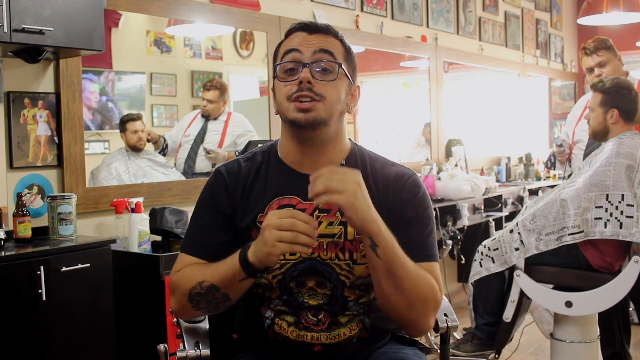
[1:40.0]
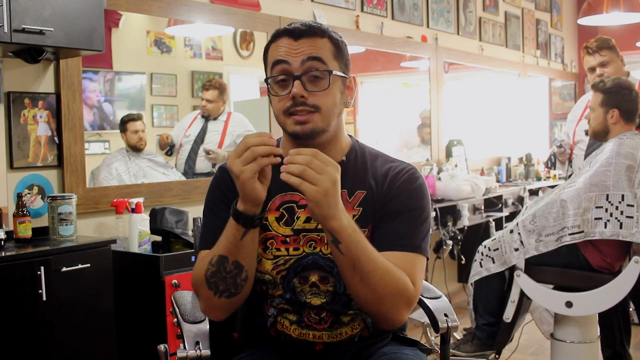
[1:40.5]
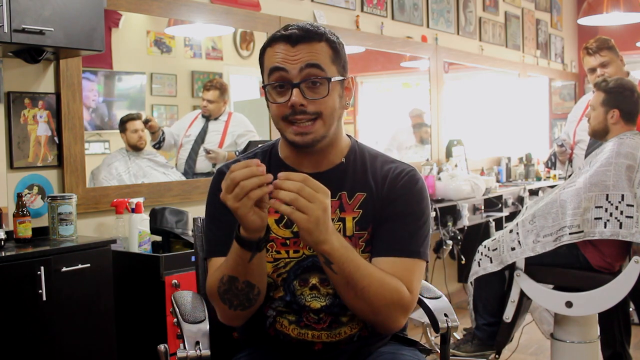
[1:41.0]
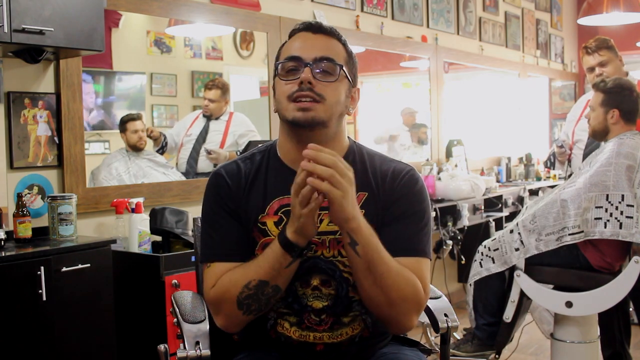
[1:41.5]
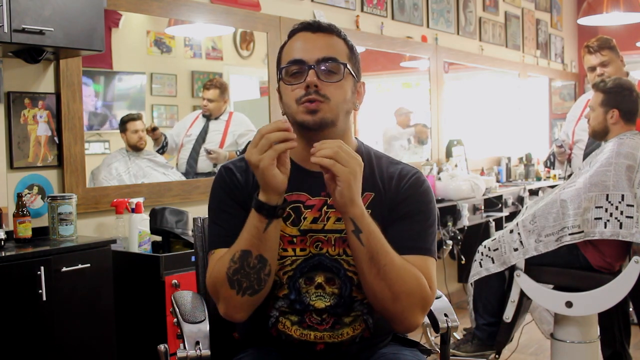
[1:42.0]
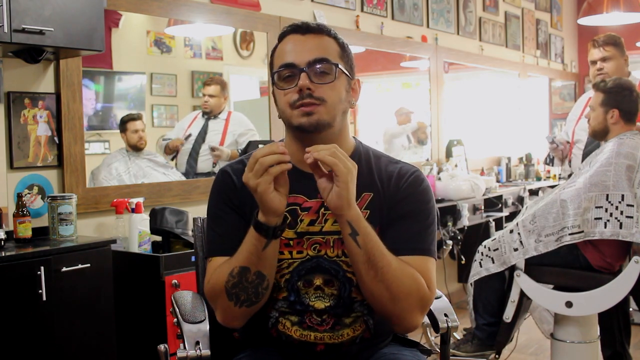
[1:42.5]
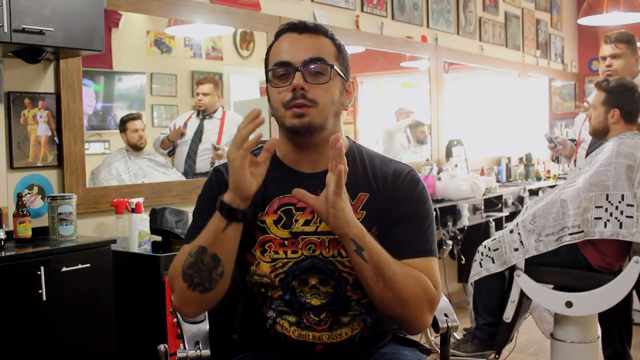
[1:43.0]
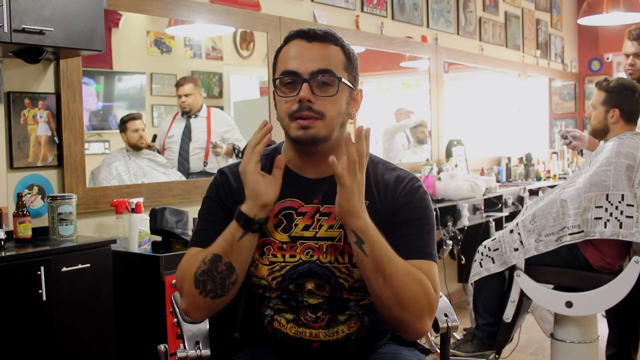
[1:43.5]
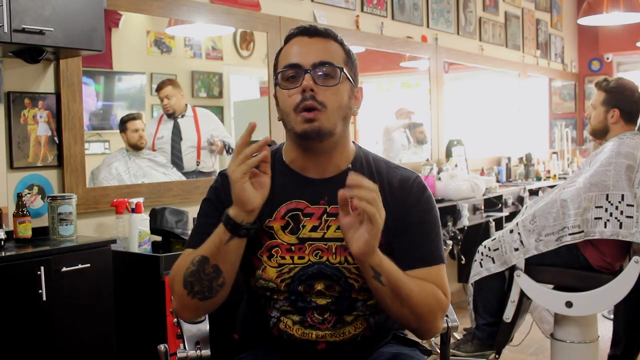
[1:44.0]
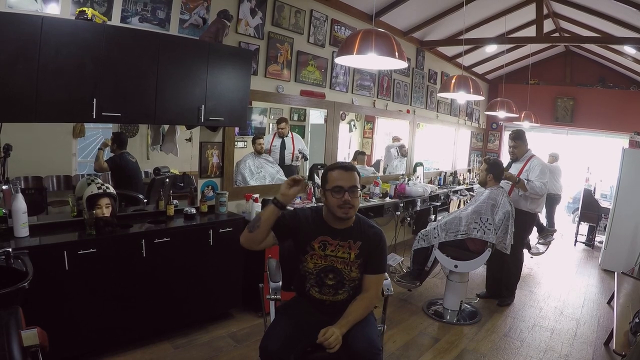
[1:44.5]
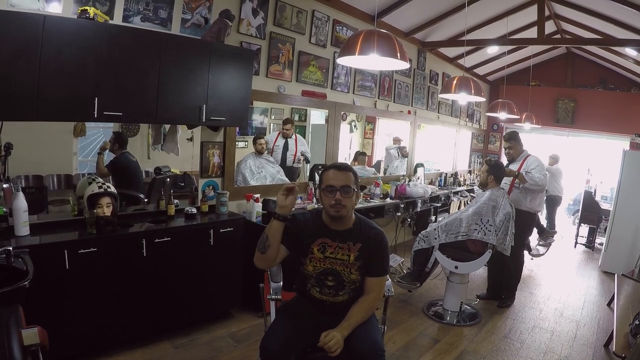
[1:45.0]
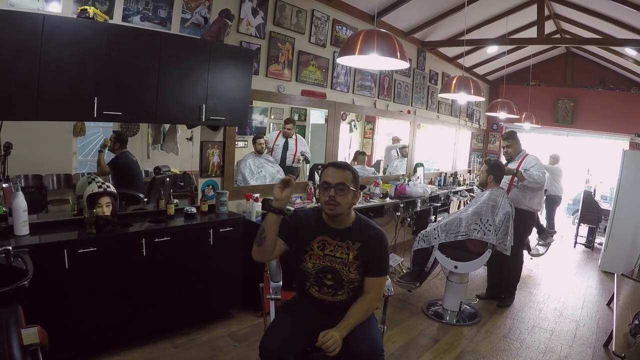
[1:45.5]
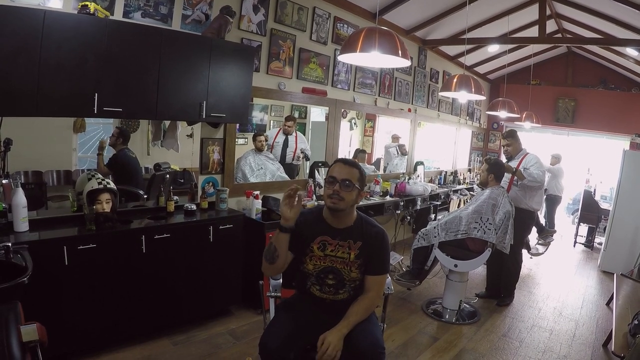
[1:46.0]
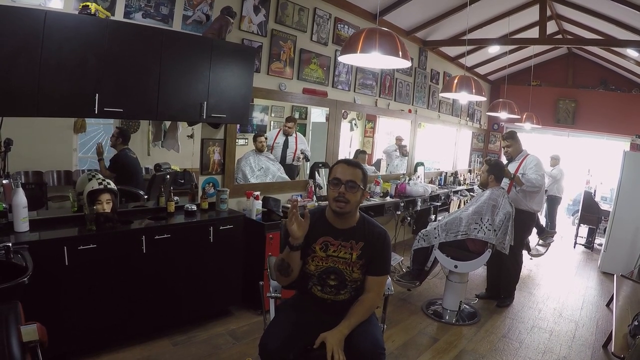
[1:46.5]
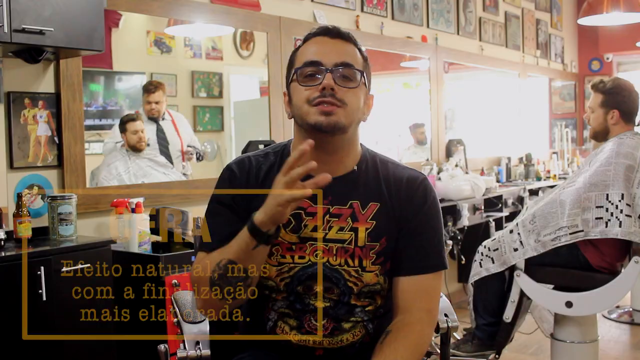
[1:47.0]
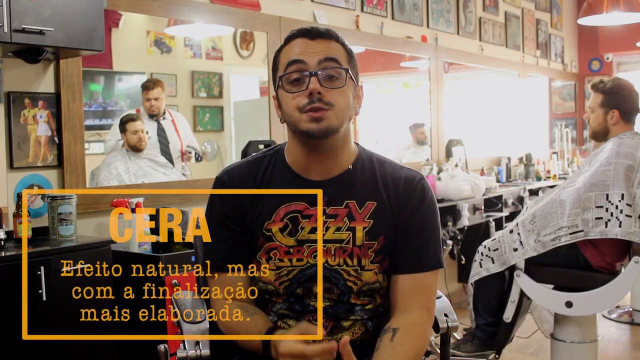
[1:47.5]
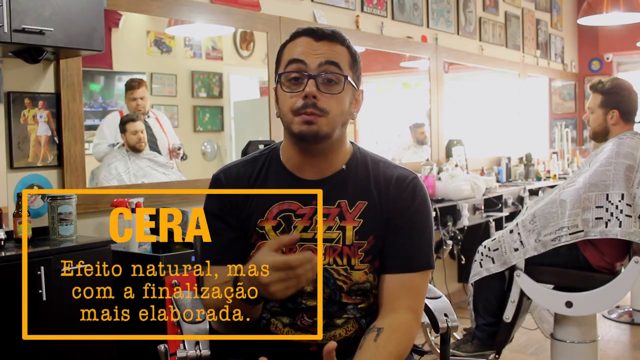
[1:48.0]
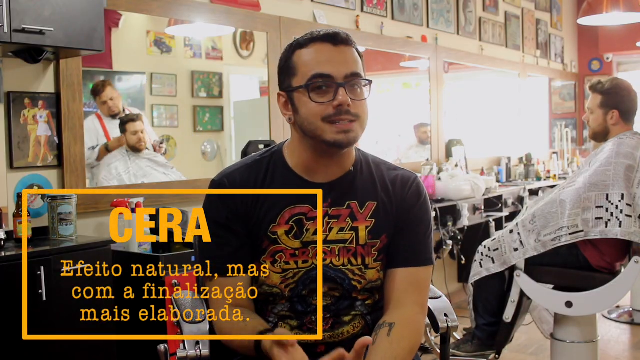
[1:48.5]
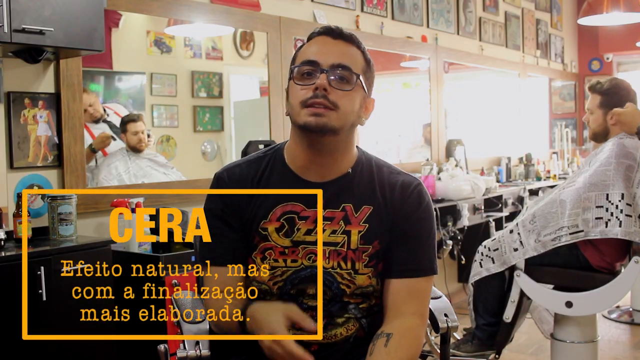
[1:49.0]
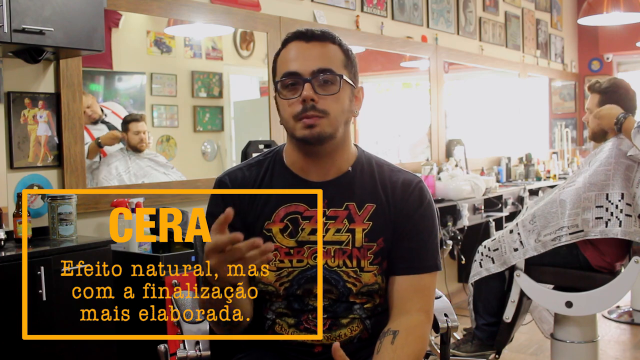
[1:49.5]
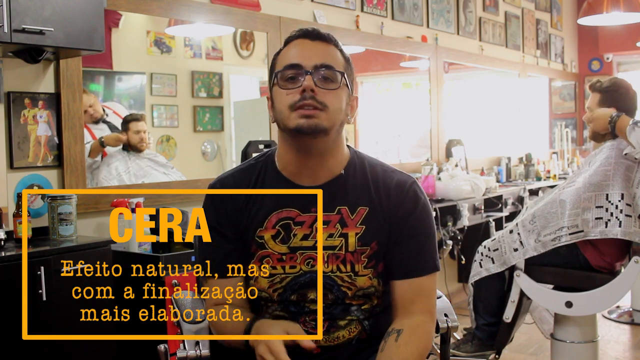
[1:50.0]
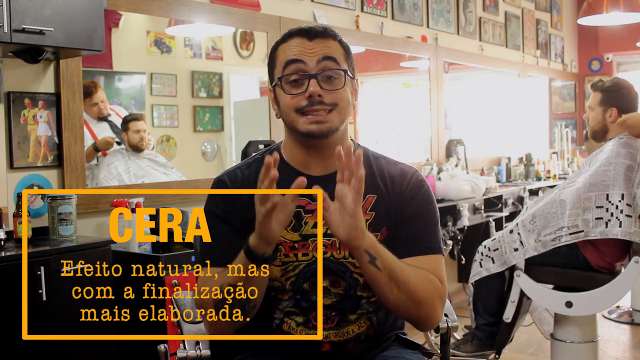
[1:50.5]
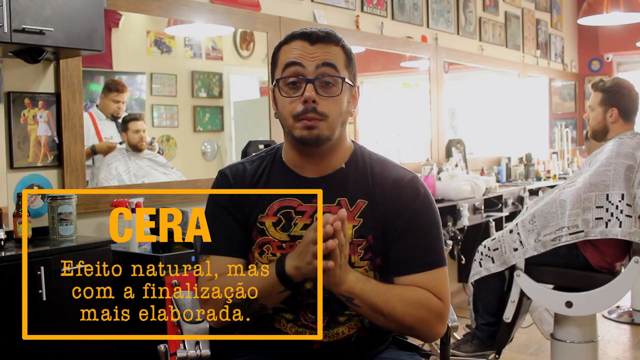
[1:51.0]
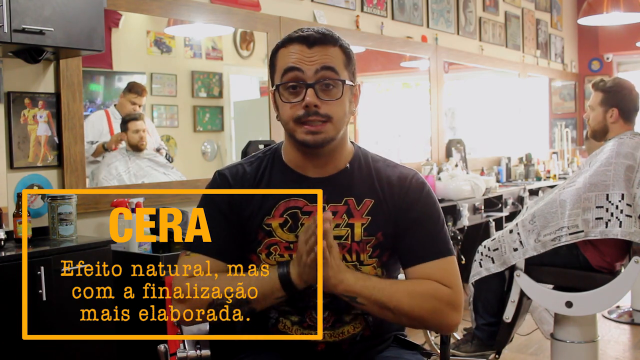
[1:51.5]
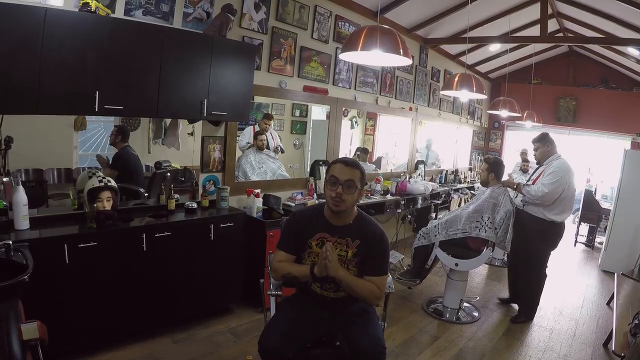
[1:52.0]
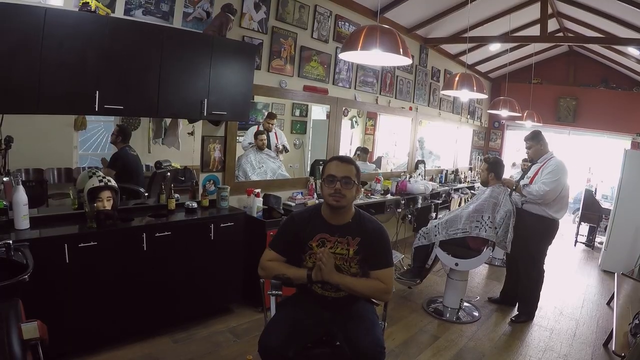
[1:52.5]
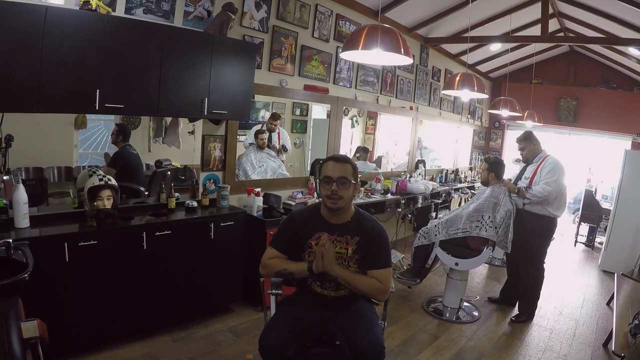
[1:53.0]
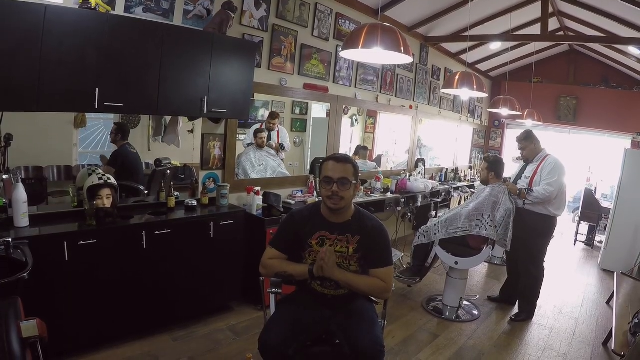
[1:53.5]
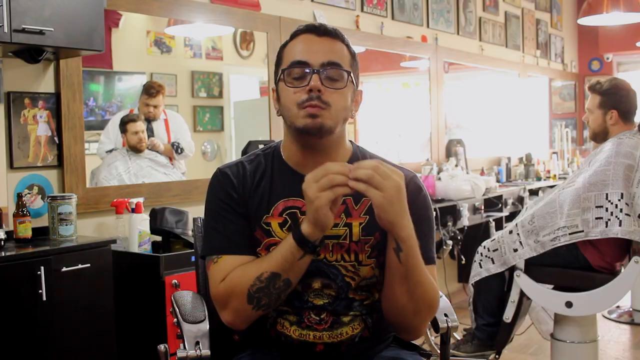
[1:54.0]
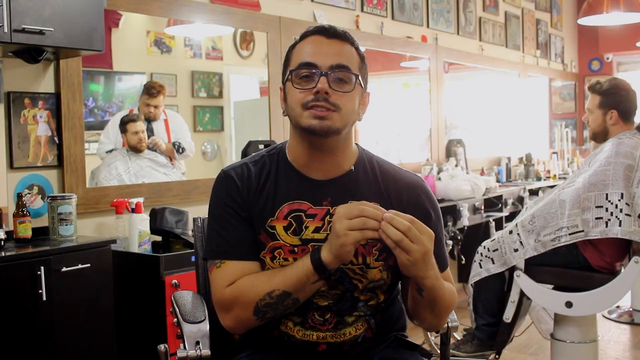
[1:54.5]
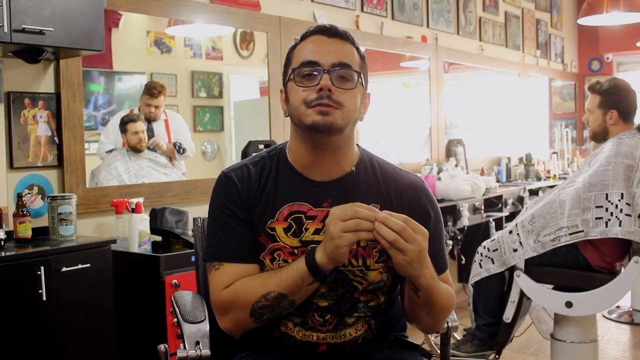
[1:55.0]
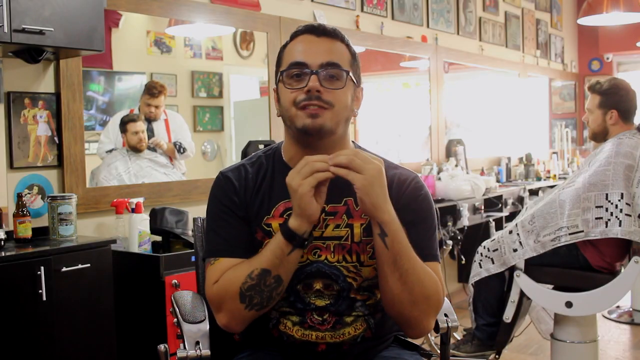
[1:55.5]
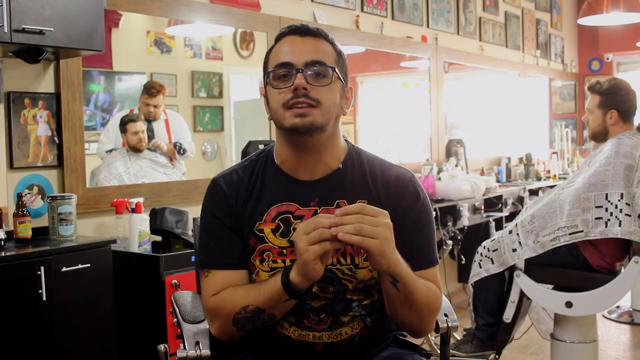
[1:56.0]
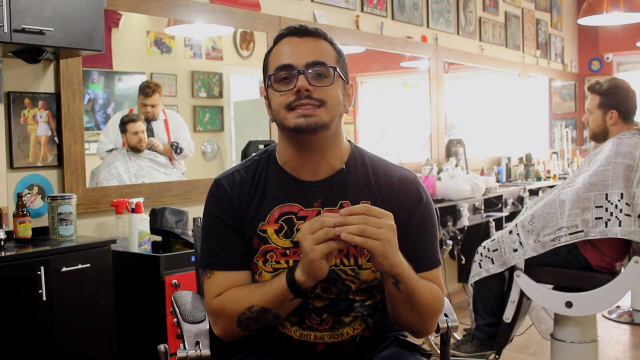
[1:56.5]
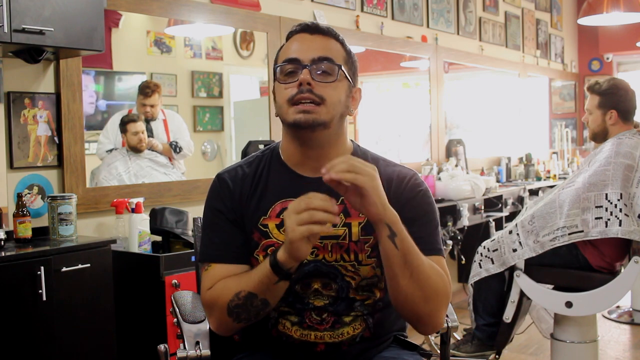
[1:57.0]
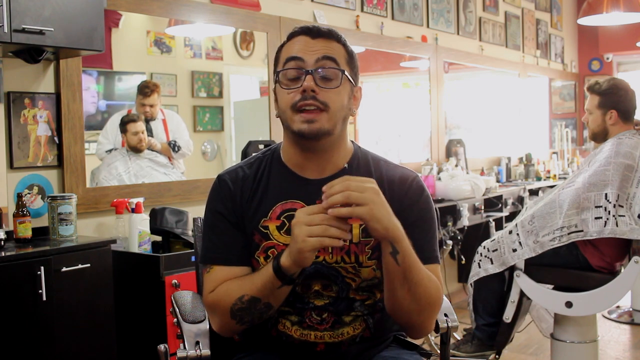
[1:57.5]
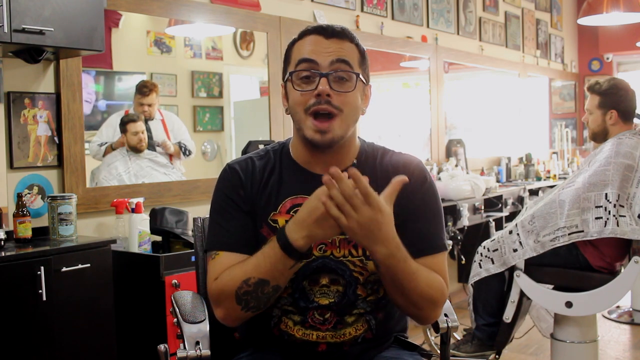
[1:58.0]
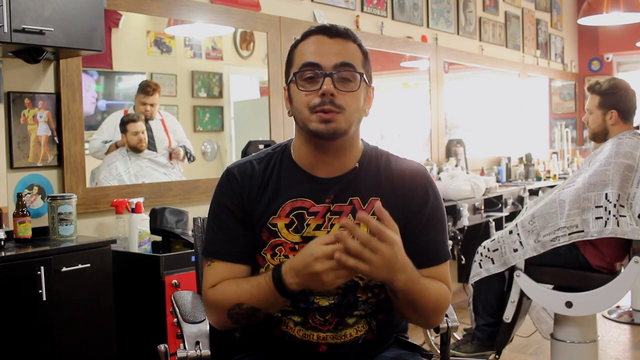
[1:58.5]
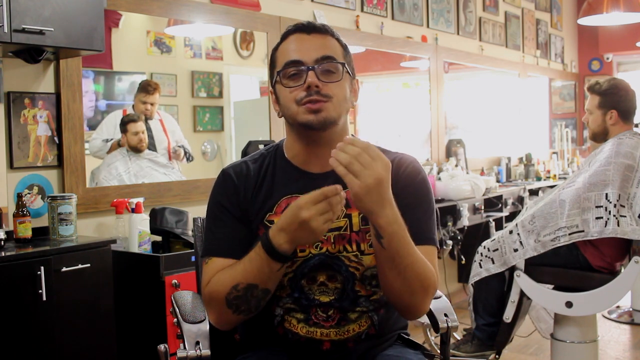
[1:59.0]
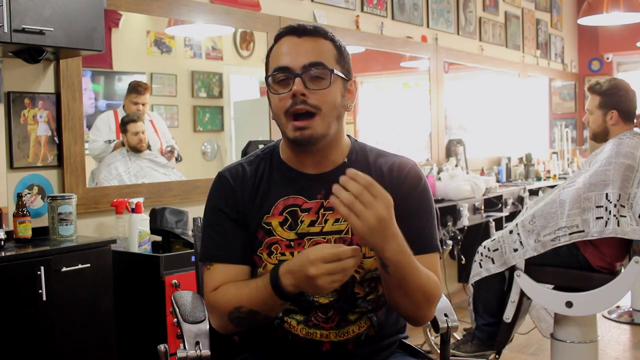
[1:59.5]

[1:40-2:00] A man in black clothes and glasses is recording a video, apparently talking about the place he is in, which looks like a salon. The place looks fancy and is full of pictures, with mirrors around the walls. Behind the speaking man there are brown carpets, the door is open, and the lights are on although it is daytime. A lady wears an orange t-shirt and black trousers, and another man in a white shirt and black shirt is trying to open the fridge. The people dressed in white apparently work in the saloon, and the man filming seems to be advertising it.